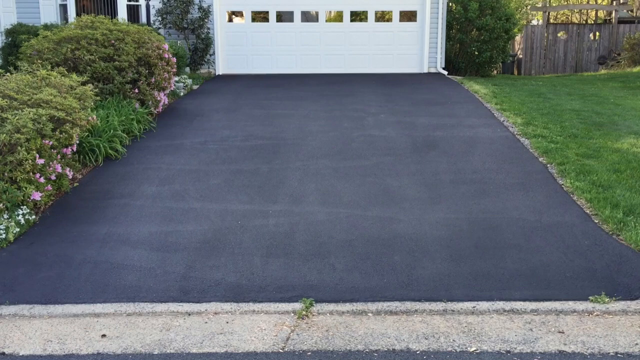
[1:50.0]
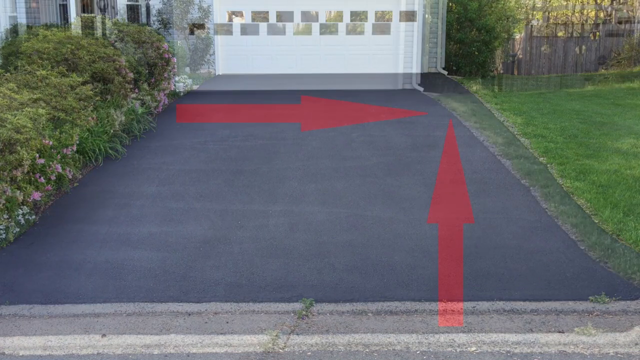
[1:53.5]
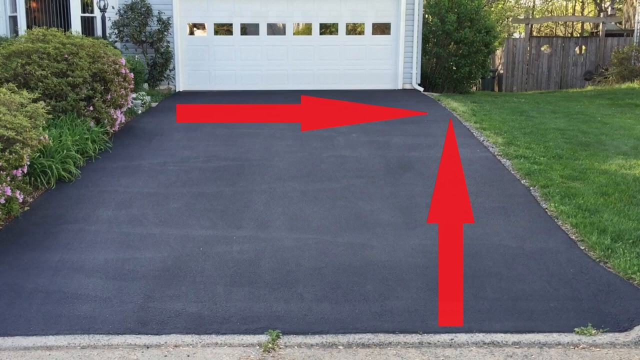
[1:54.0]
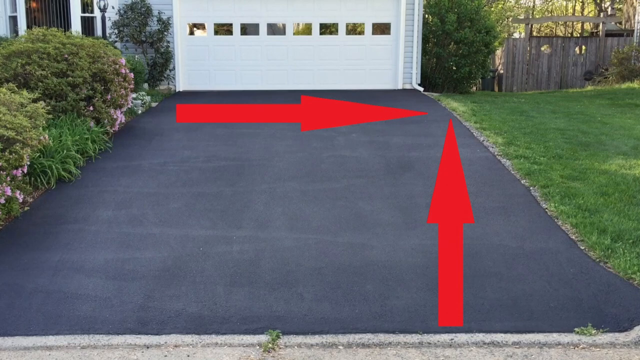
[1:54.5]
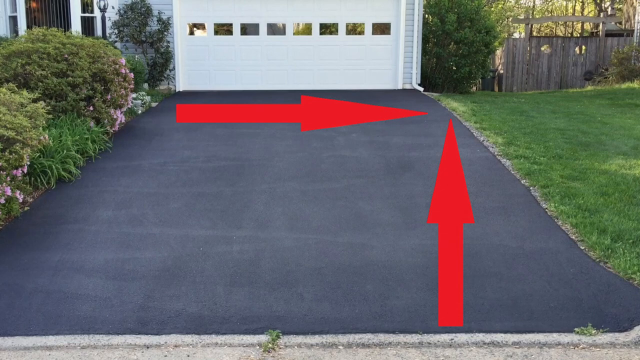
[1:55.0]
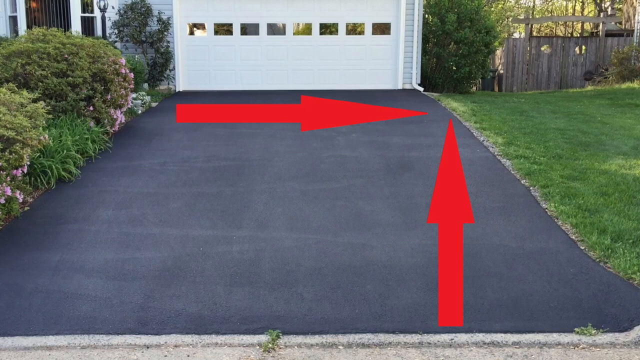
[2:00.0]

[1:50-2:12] An old tarred road is shown in a picture along with the double-storey house. Two men with paving machines are working on the road. A before view of the yard without paving is followed by an after view, where the grass is greener and a blue four-by-four is parked outside. The two arrows of 20 feet and 30 feet are shown, giving 600 square feet, at three to four dollars per square foot. The white garage and pink flowers are visible, and a cost of two thousand four hundred is given.